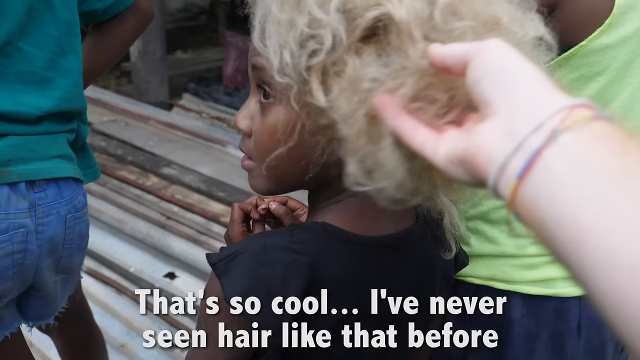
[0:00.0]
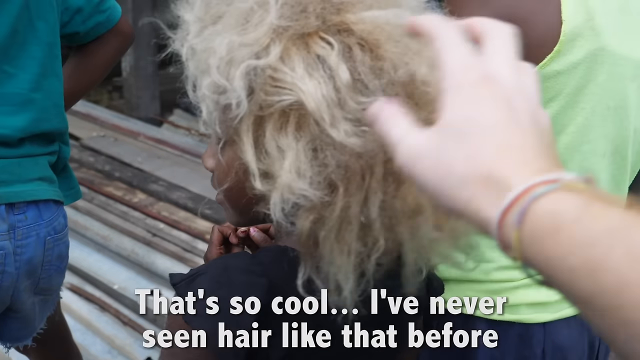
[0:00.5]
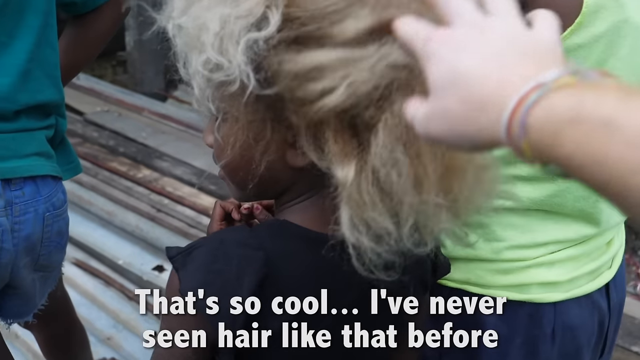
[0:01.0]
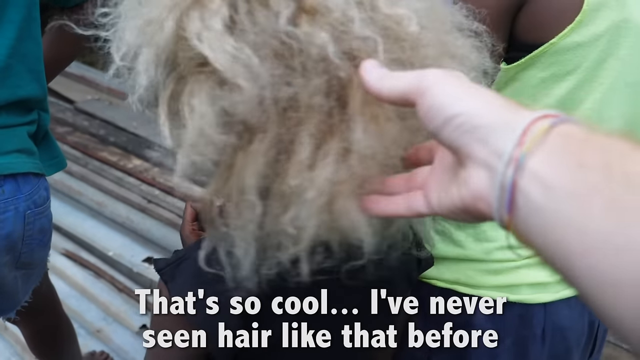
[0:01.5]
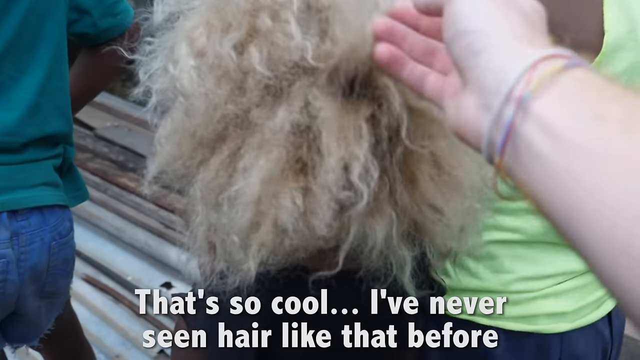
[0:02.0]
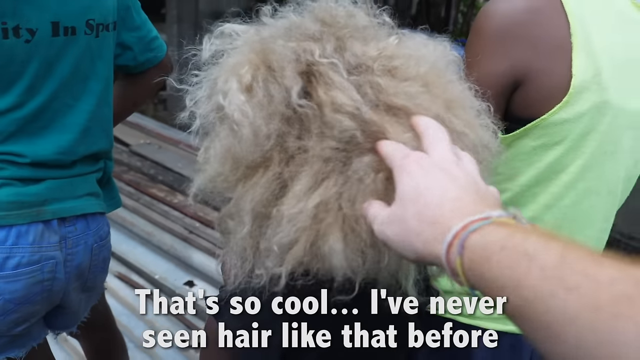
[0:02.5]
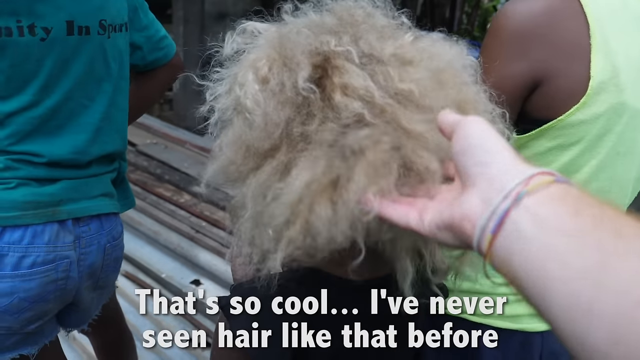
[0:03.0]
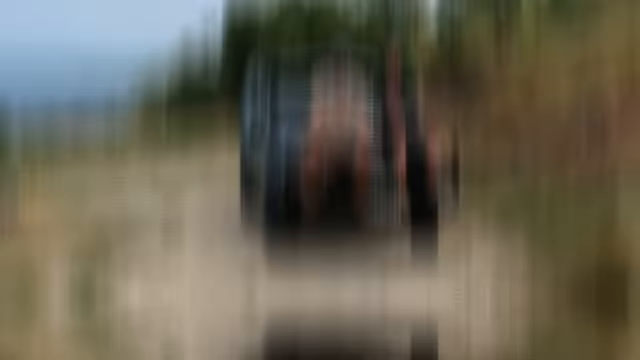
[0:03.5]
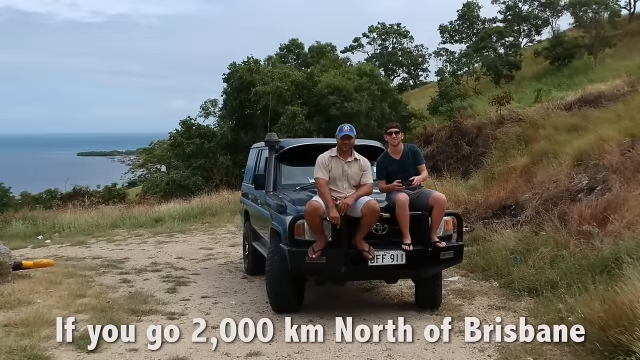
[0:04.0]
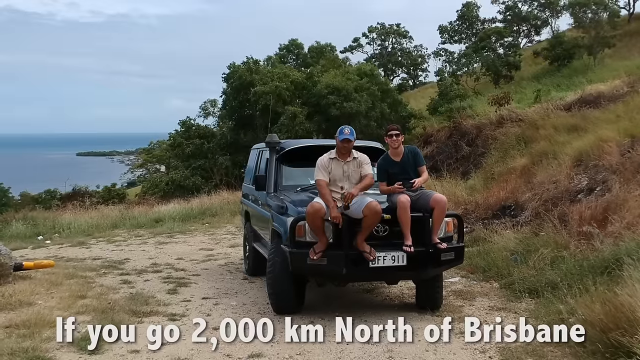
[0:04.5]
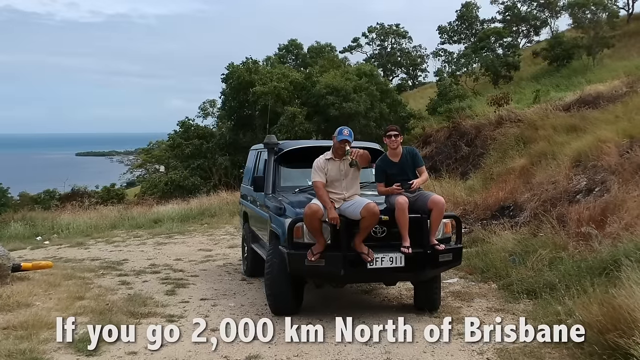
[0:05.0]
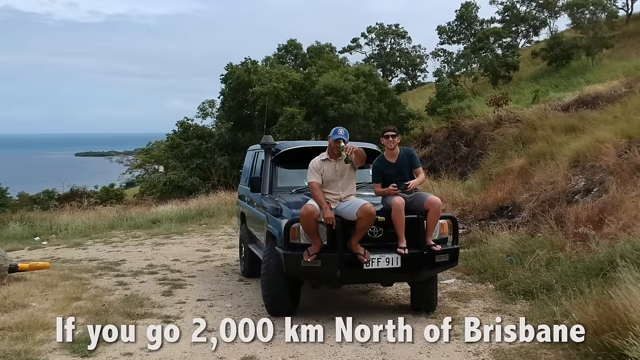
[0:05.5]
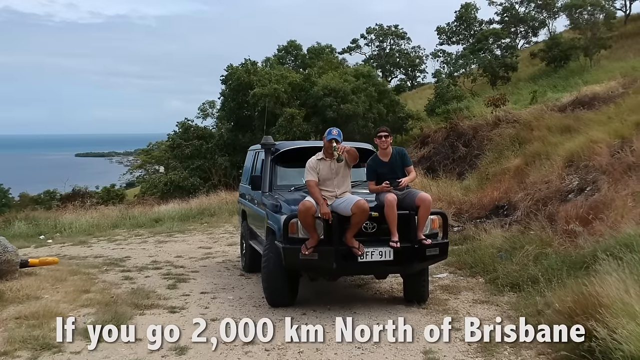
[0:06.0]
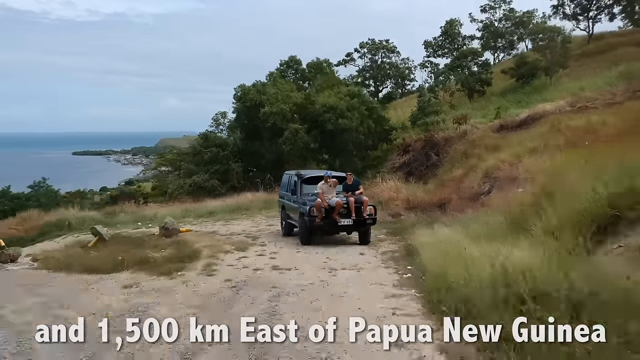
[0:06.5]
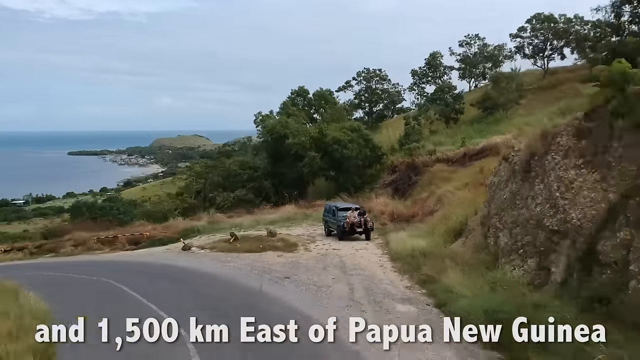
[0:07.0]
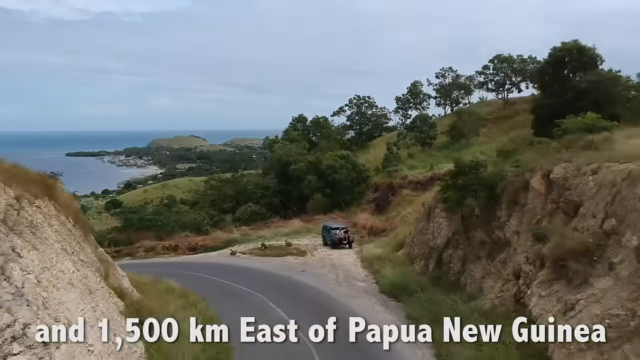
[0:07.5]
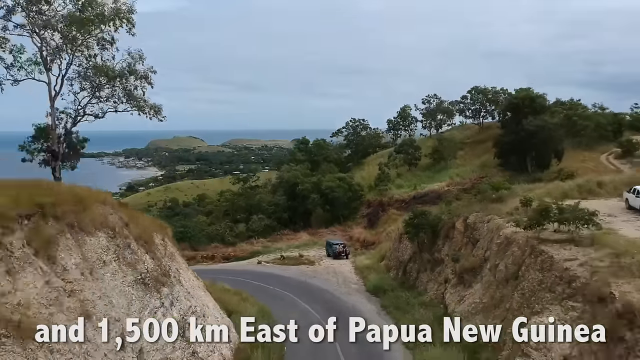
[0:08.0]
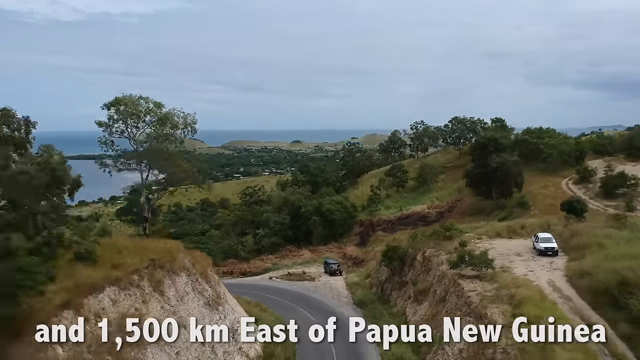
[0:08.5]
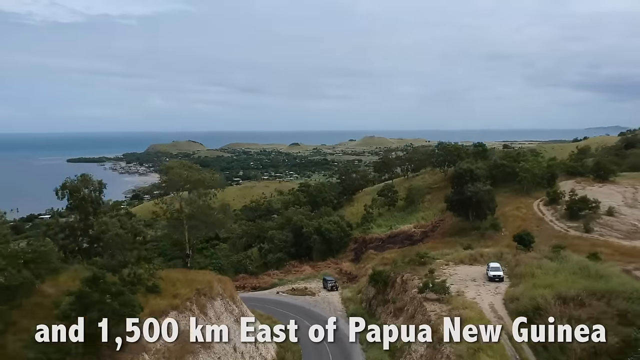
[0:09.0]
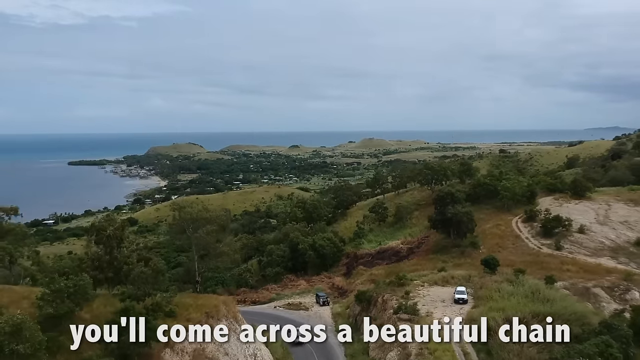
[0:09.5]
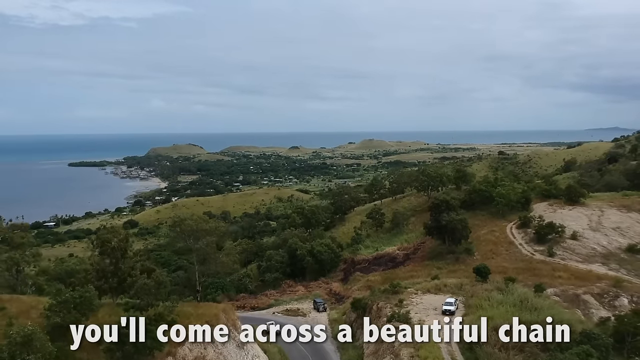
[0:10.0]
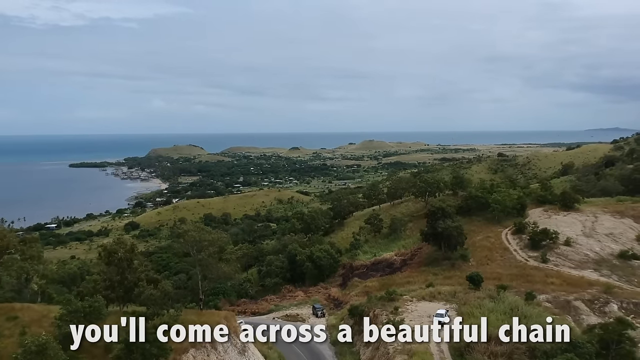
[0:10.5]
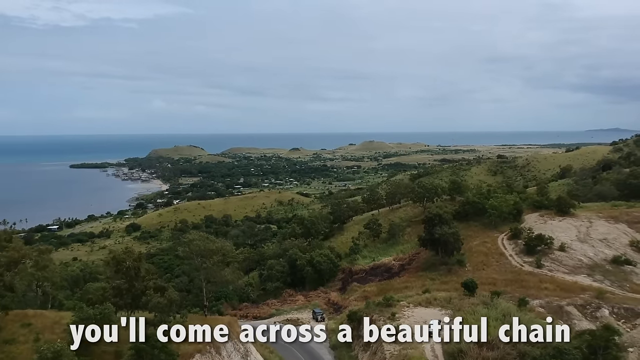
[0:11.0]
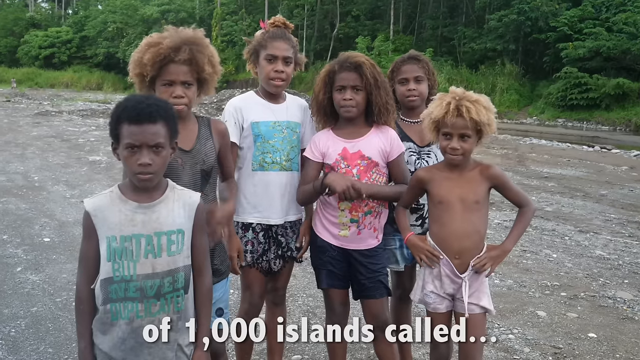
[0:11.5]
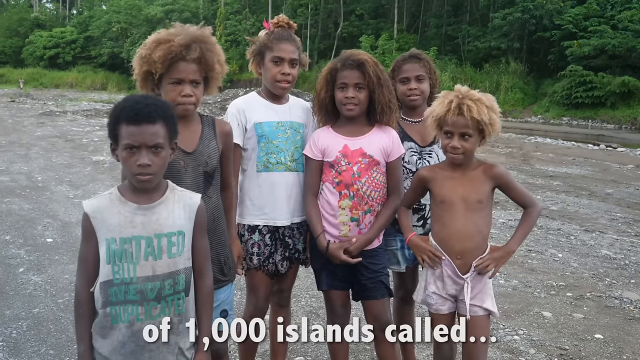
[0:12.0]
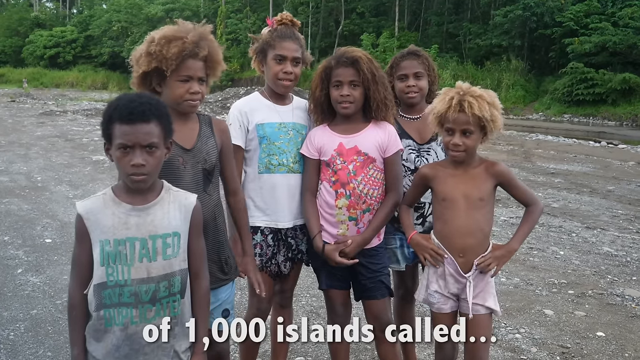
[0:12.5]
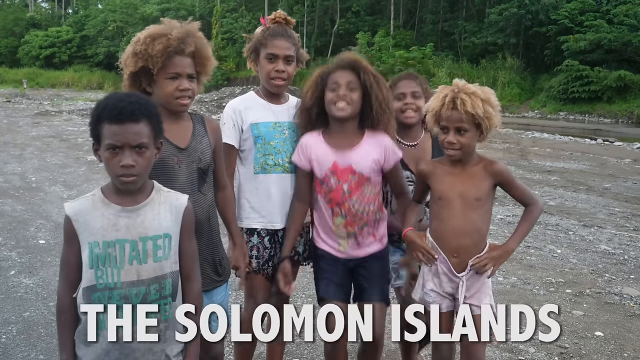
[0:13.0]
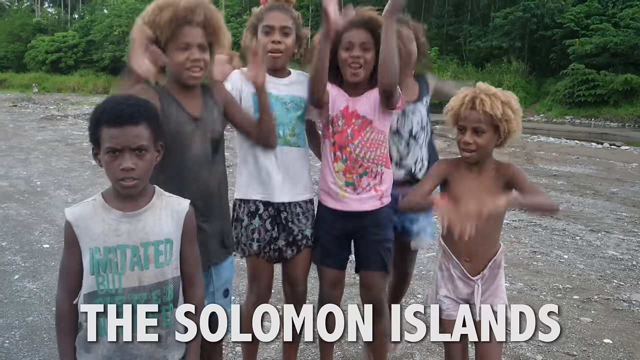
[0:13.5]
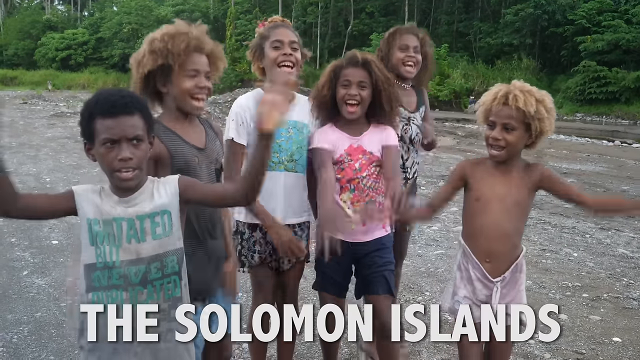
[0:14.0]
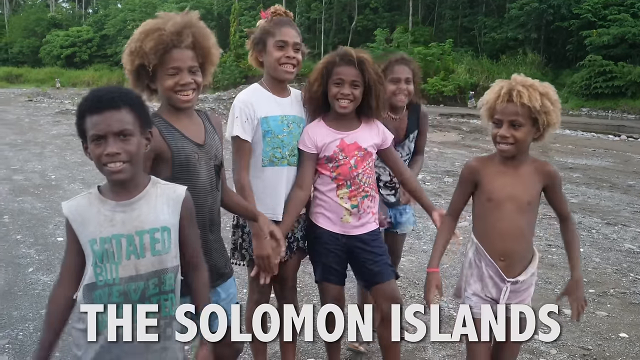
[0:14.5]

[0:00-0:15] The video appears to be a documentary about the Solomon Islands, featuring residents, many of whom have naturally blonde hair. Subtitles name the place as the Solomon Islands. Two men talk together, and at the end of the segment locals jump for joy.